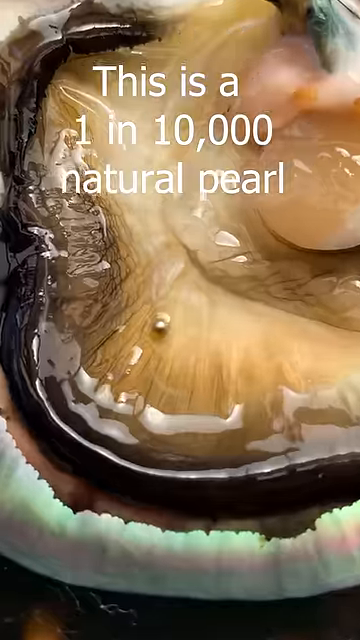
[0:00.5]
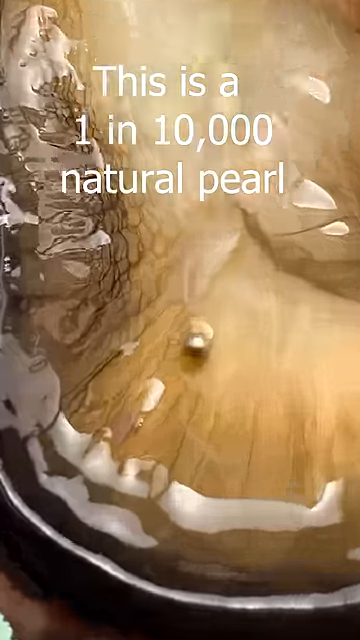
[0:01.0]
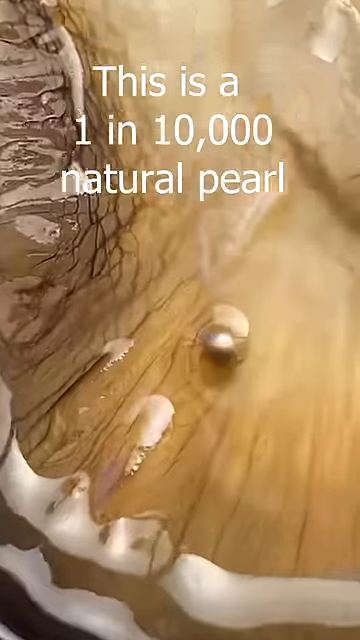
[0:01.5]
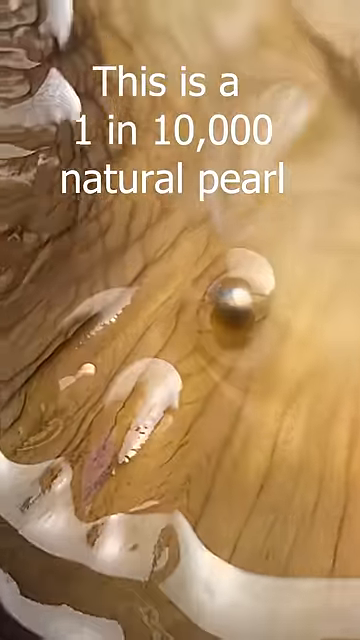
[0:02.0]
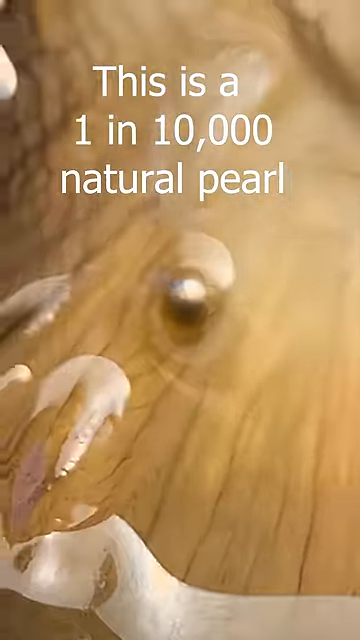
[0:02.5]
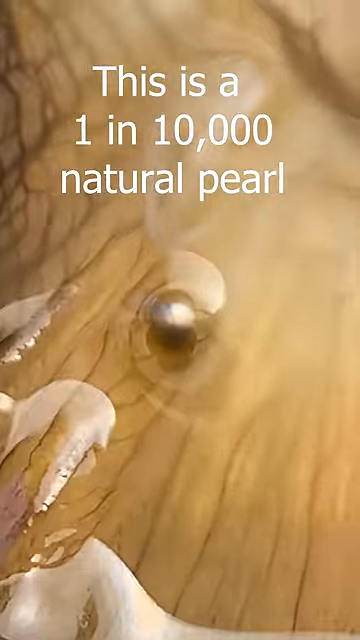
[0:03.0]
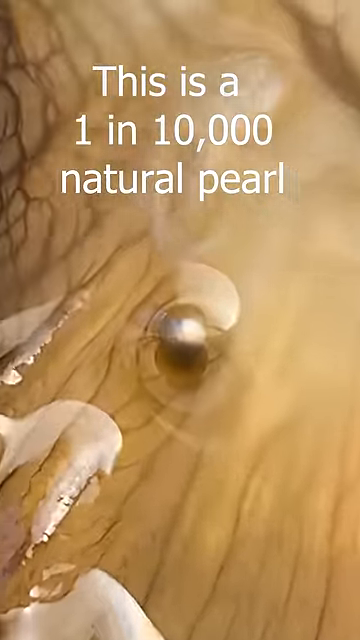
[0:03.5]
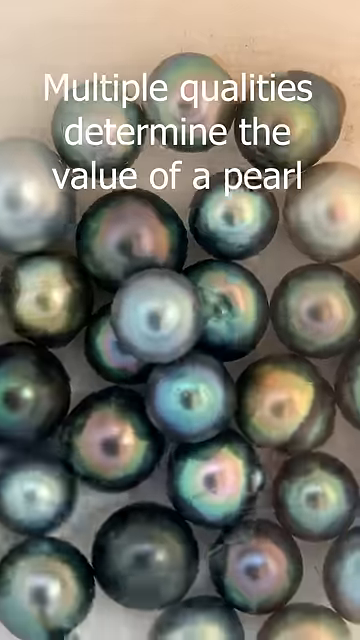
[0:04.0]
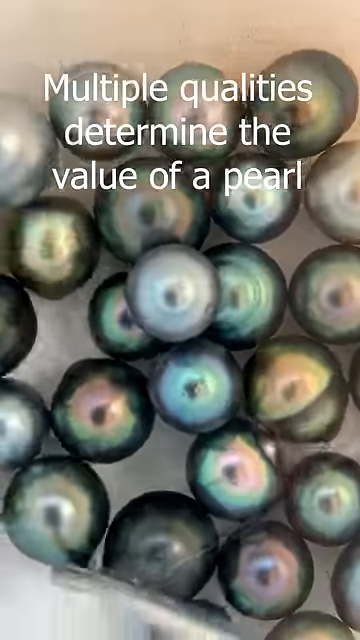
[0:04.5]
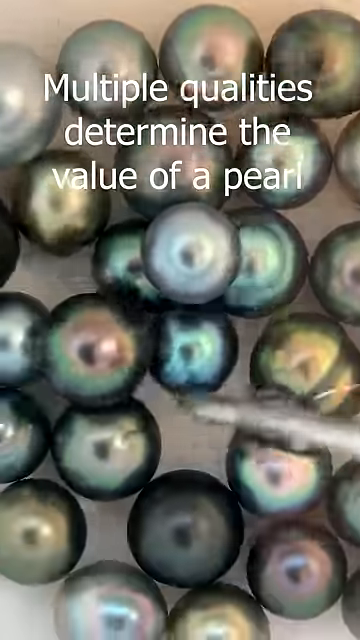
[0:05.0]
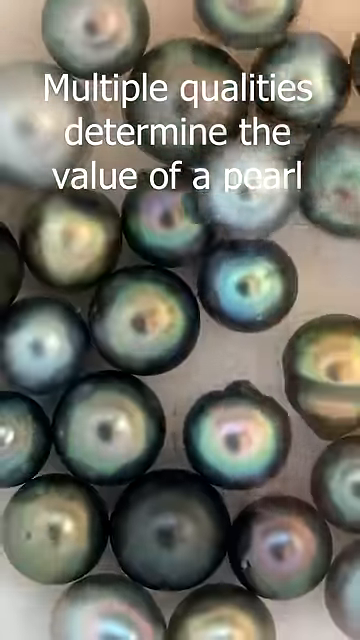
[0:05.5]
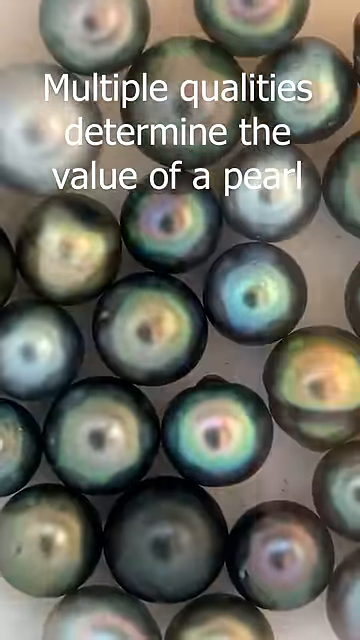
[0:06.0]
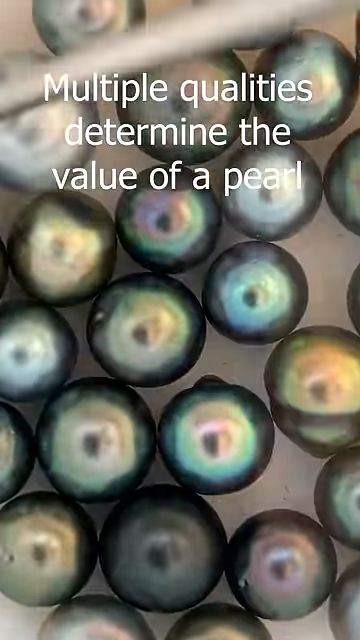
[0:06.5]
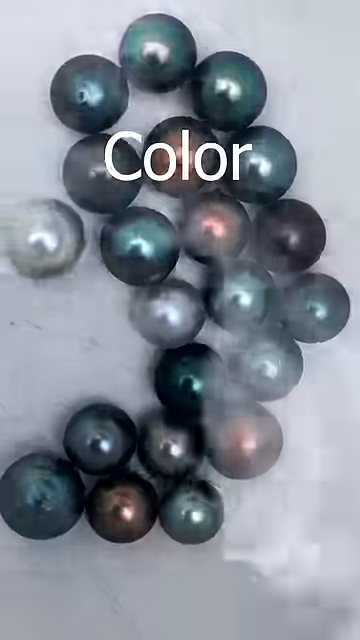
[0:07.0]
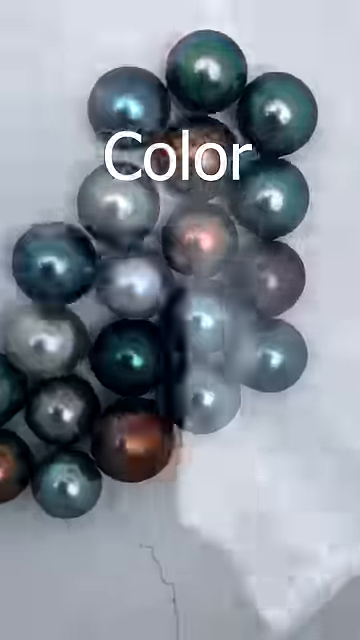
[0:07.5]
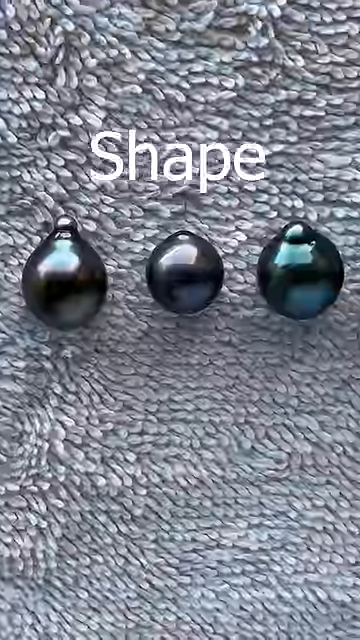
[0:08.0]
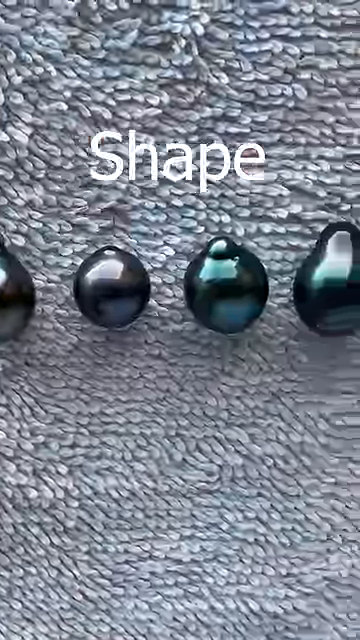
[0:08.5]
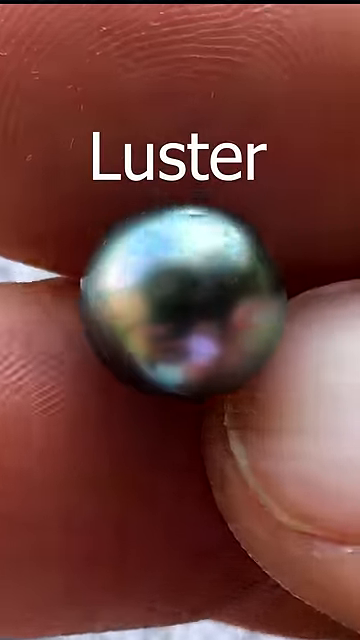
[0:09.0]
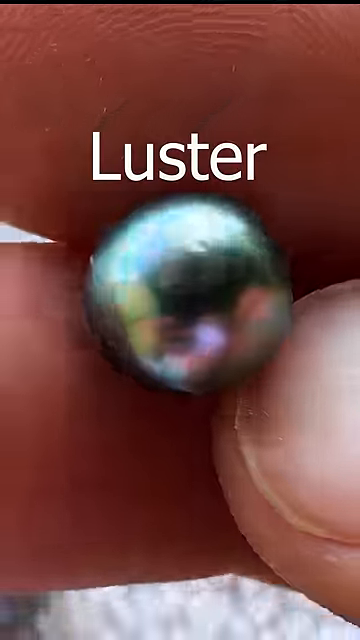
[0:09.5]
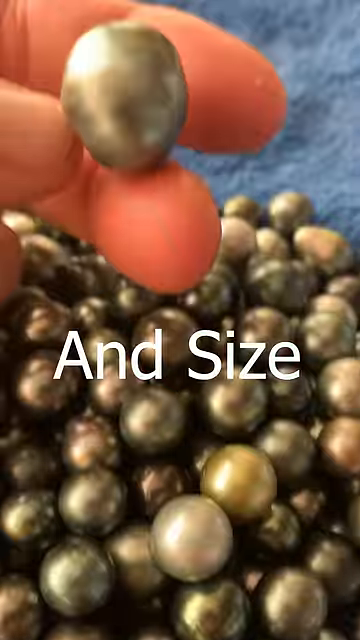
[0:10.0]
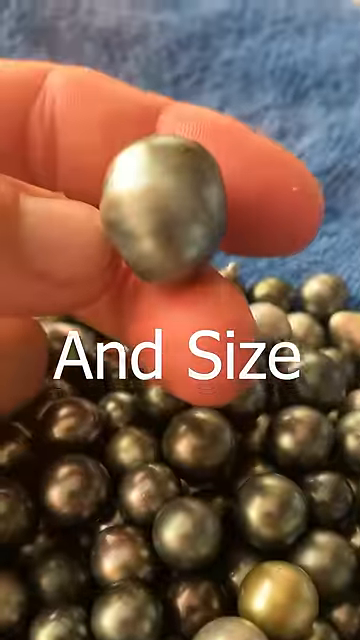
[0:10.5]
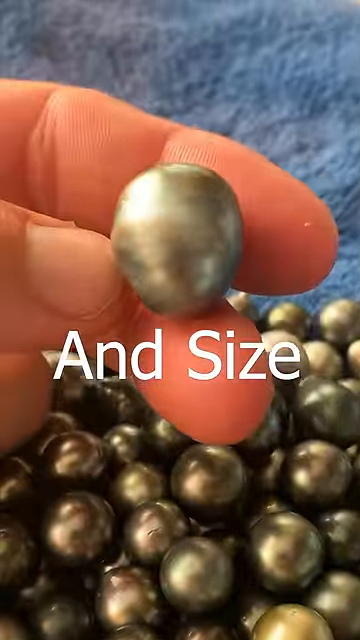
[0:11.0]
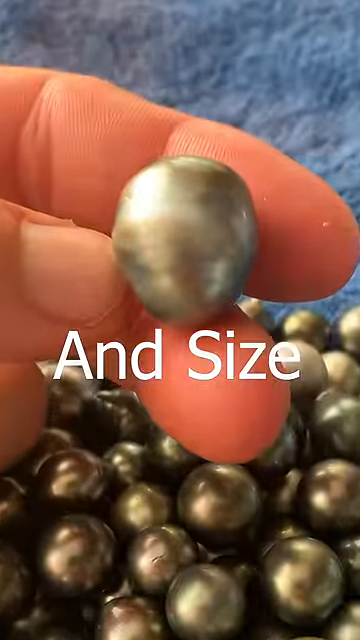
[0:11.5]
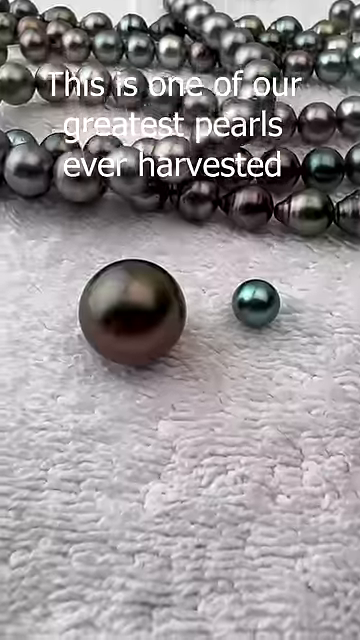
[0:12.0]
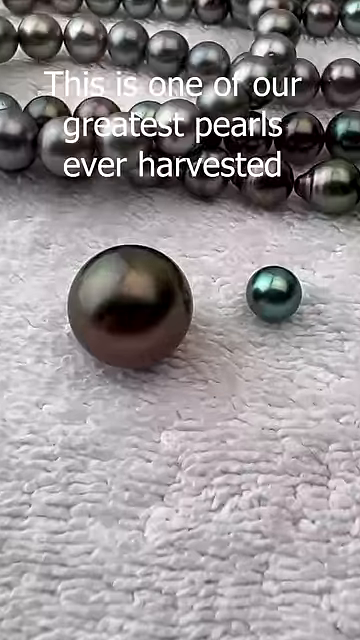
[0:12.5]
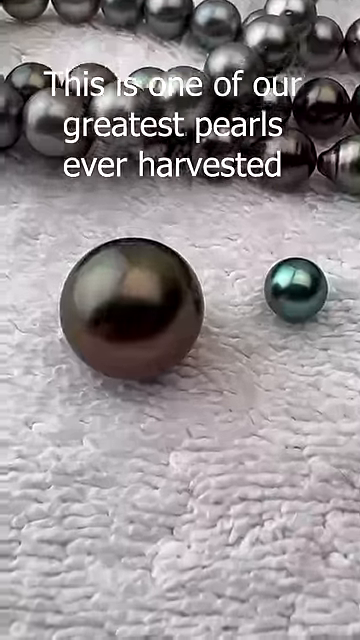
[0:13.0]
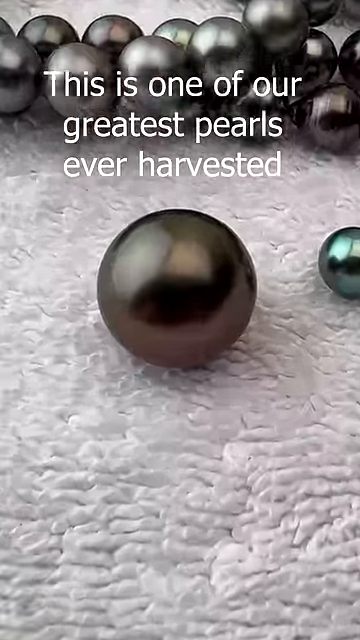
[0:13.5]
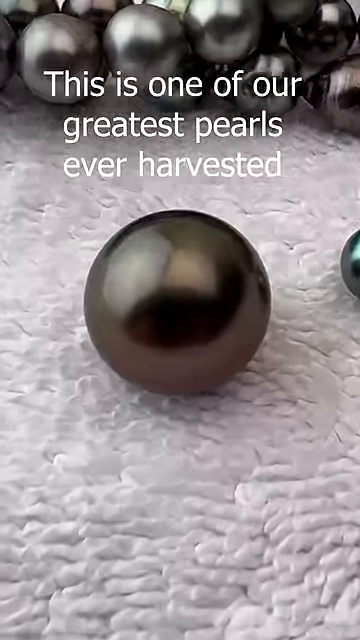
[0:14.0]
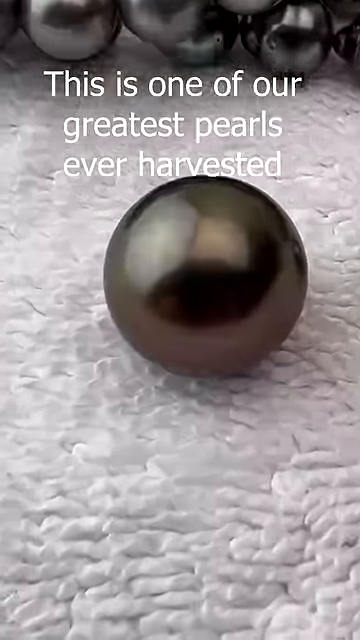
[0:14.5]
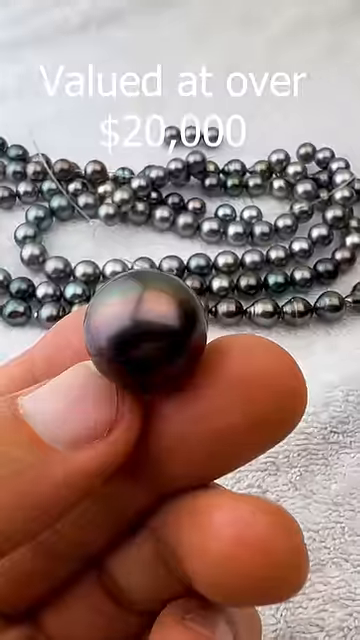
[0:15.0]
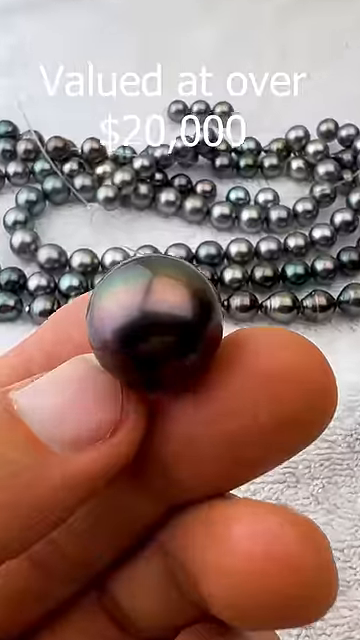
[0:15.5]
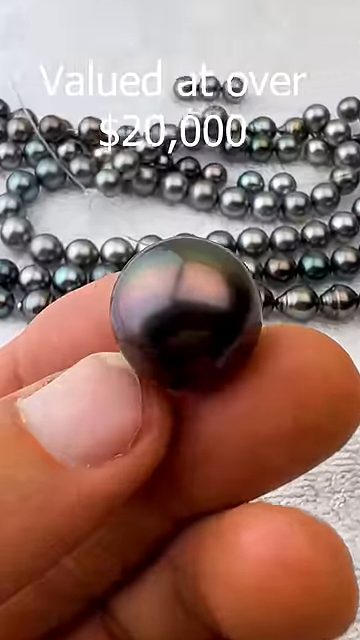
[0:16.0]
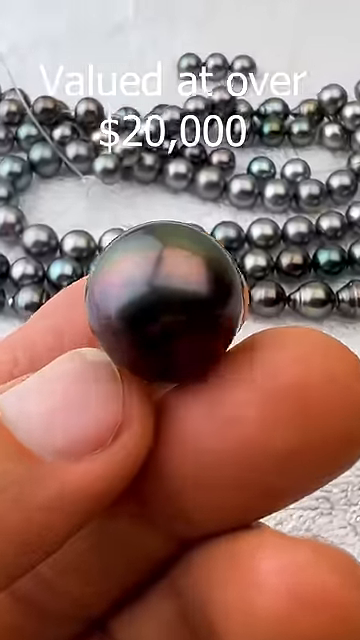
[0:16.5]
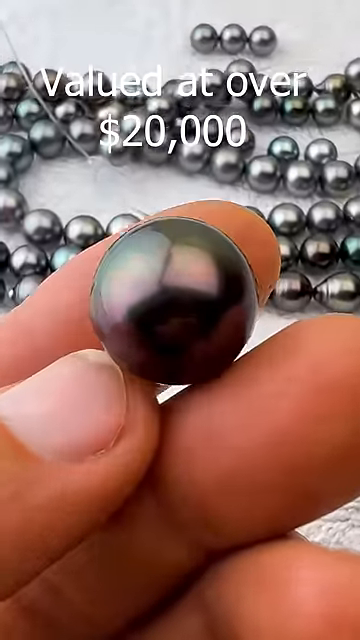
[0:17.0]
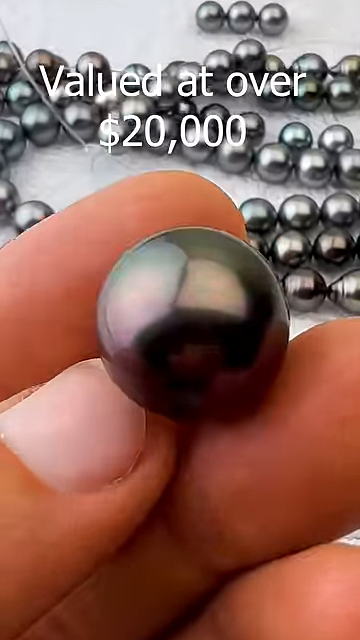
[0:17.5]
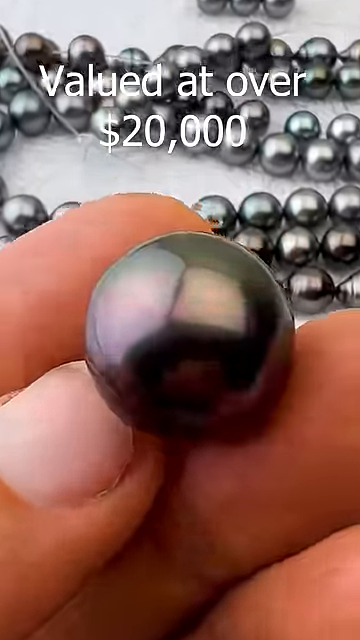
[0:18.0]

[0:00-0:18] Pearls of many different colors, sizes and shapes that have been found in oysters are shown, along with the value of each one. The colors appear to span all shades: blues, golds, greens, even some blacks, and possibly some pinkish ones. There are also some of the familiar whitish pearls. The video shows what each of these pearls and sizes is worth in money.